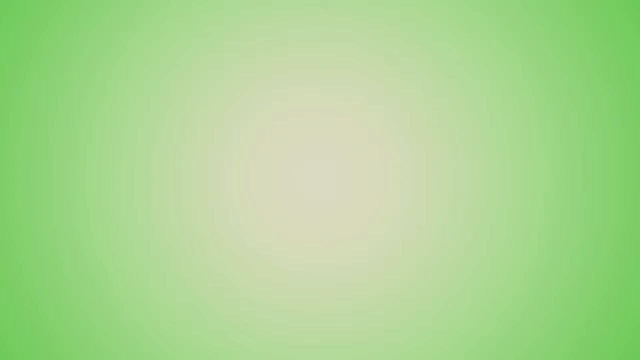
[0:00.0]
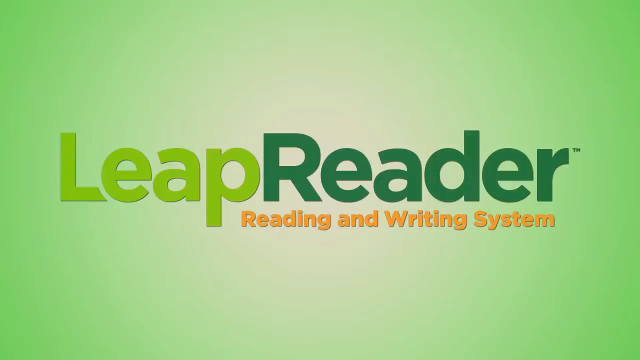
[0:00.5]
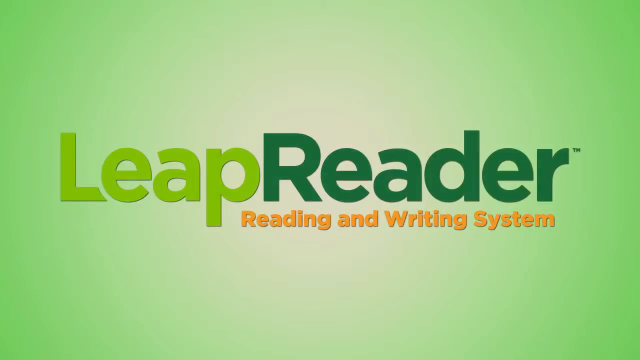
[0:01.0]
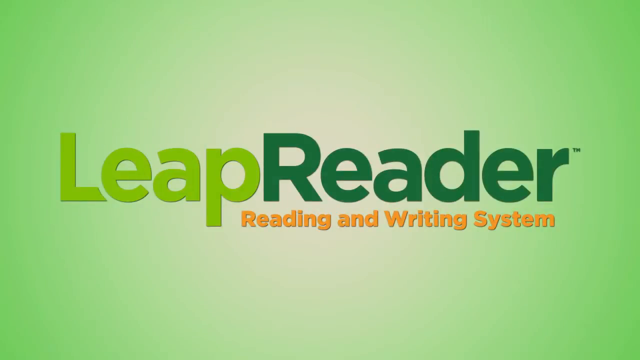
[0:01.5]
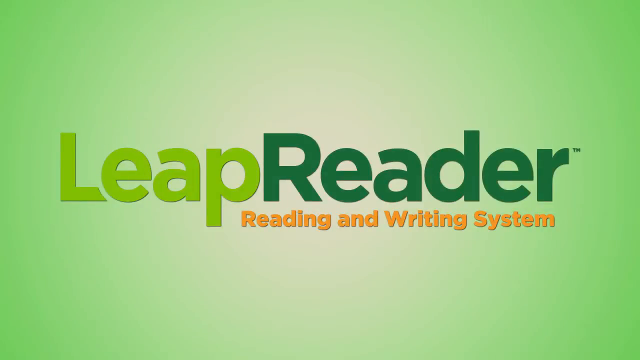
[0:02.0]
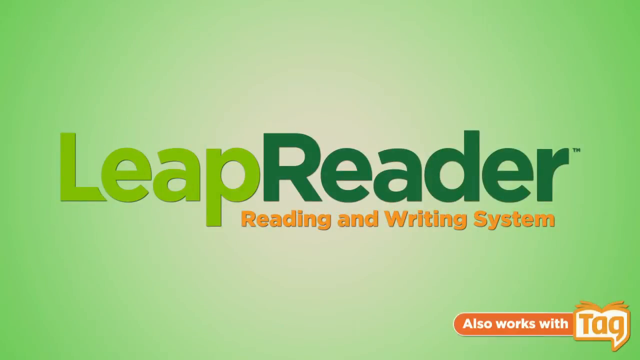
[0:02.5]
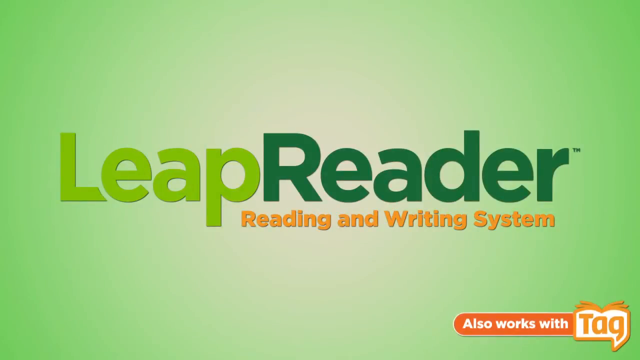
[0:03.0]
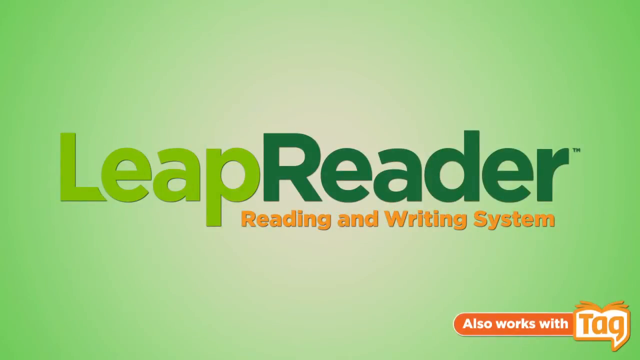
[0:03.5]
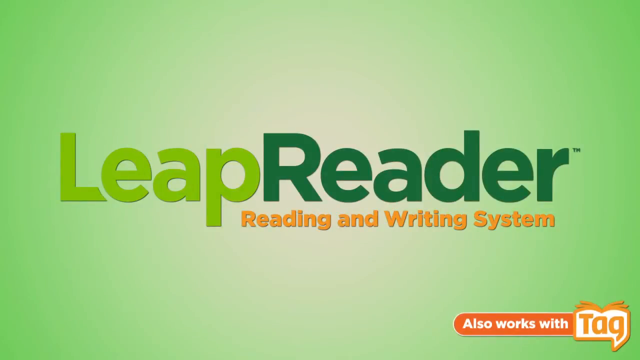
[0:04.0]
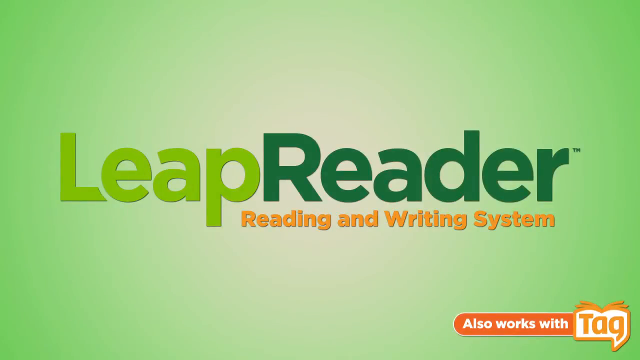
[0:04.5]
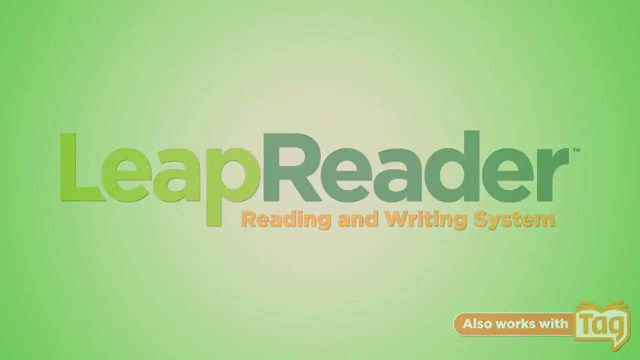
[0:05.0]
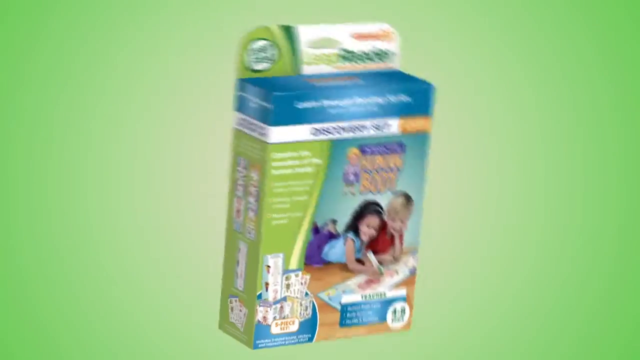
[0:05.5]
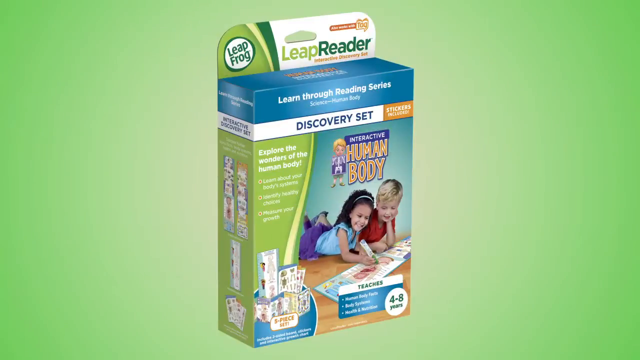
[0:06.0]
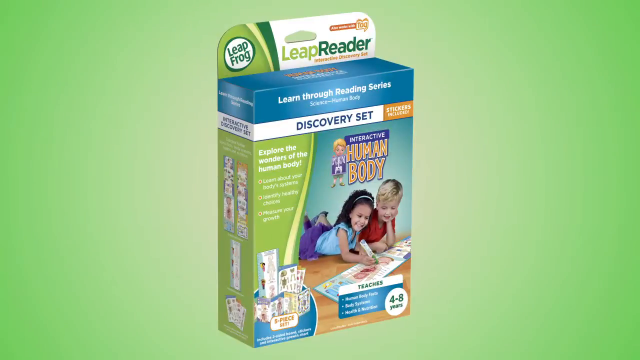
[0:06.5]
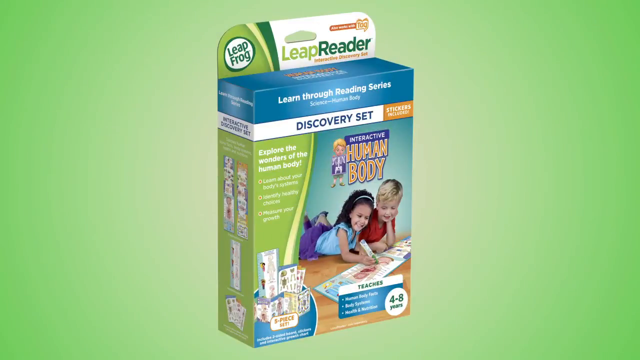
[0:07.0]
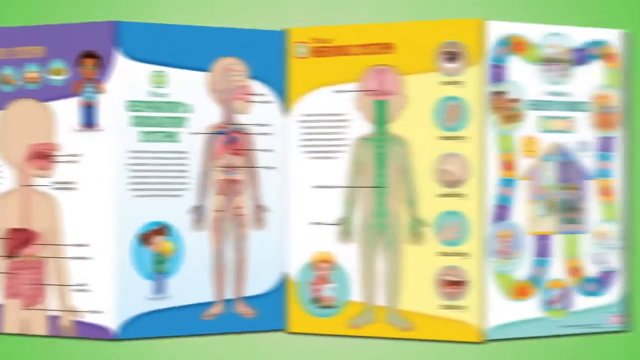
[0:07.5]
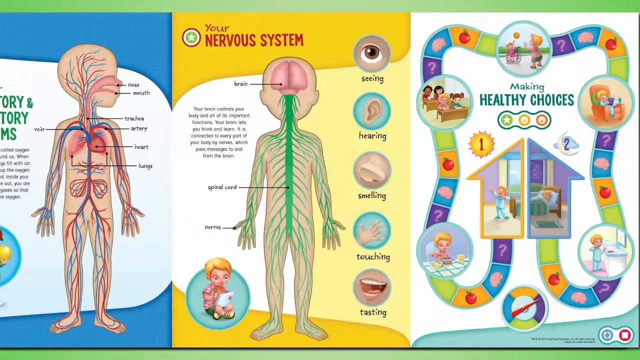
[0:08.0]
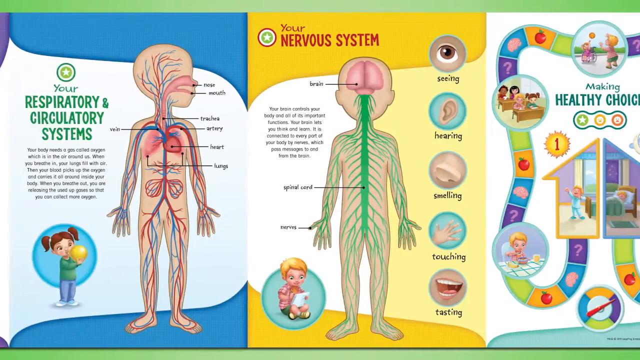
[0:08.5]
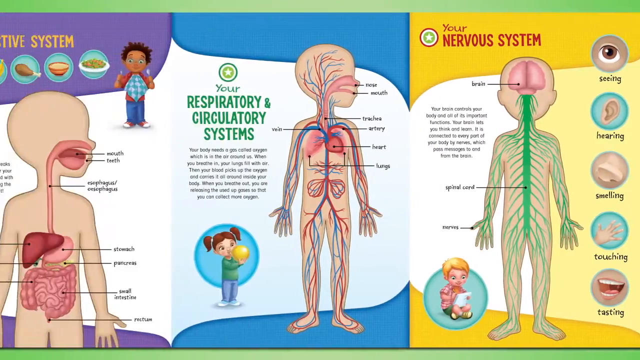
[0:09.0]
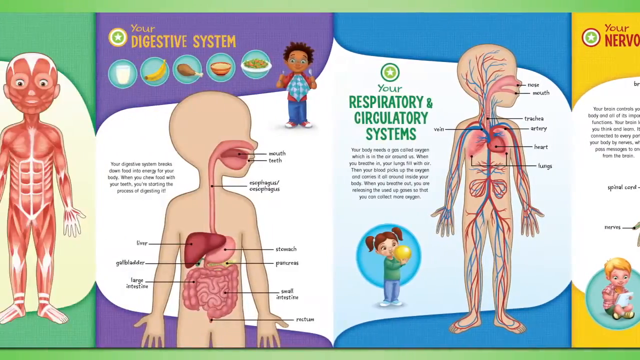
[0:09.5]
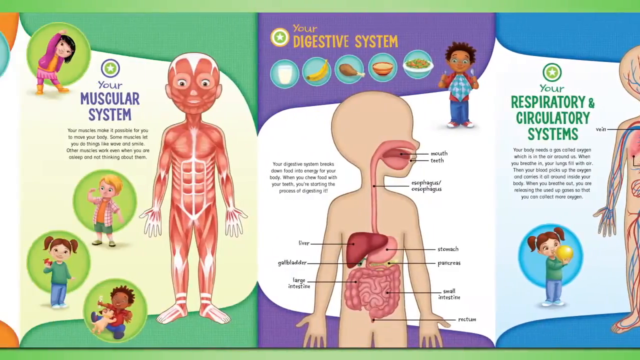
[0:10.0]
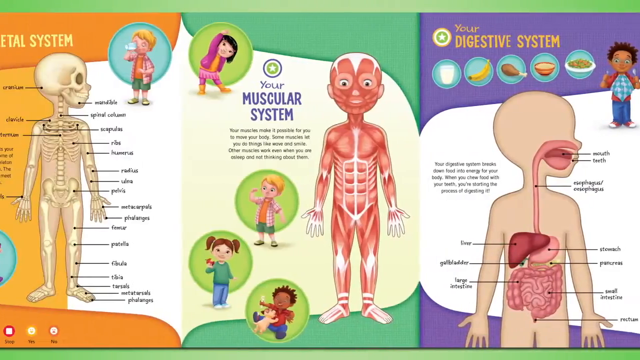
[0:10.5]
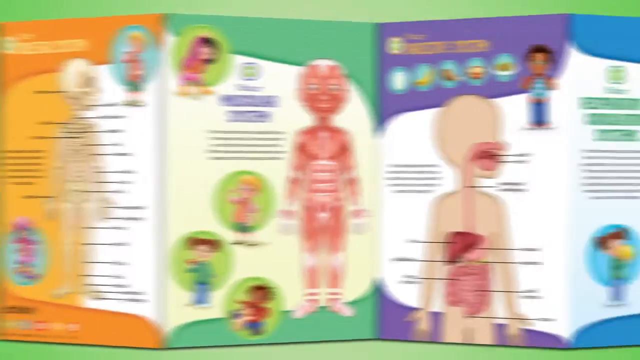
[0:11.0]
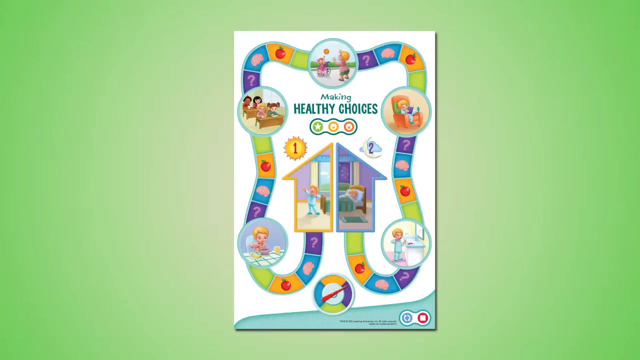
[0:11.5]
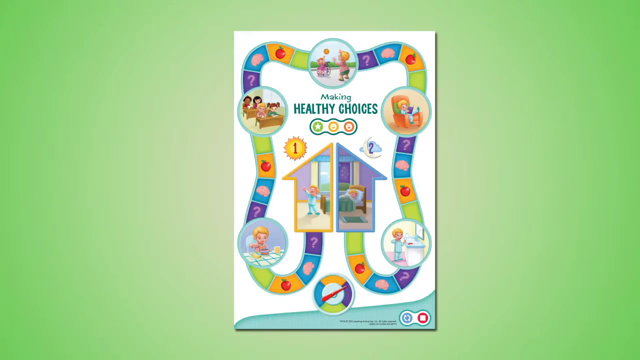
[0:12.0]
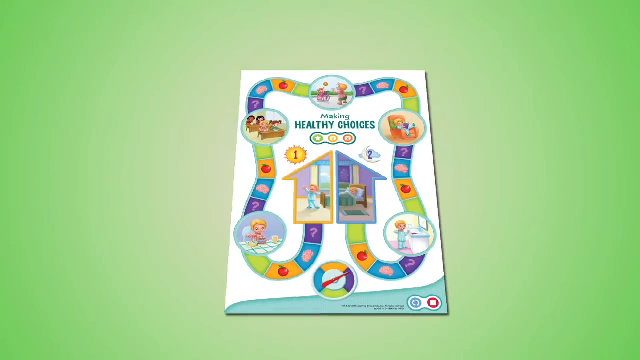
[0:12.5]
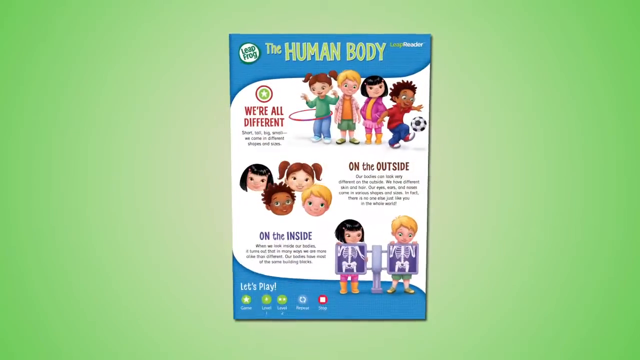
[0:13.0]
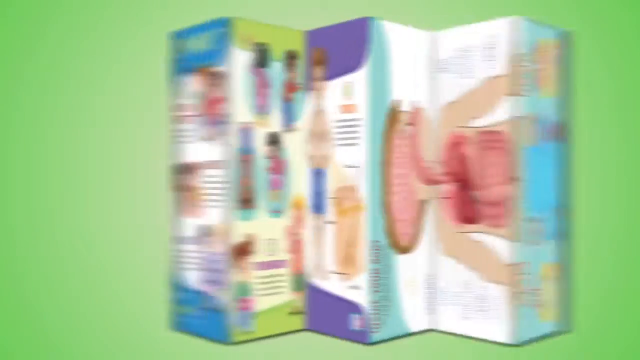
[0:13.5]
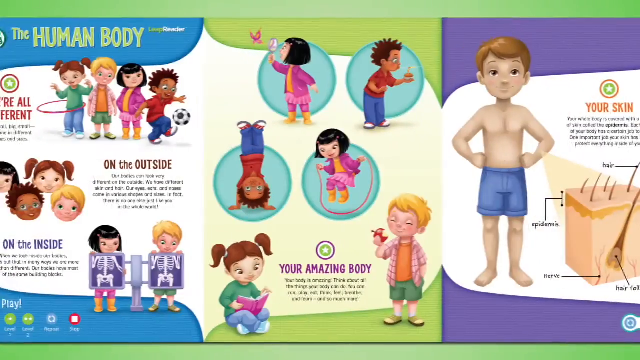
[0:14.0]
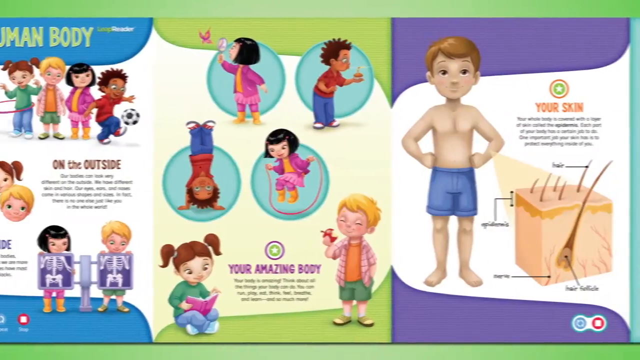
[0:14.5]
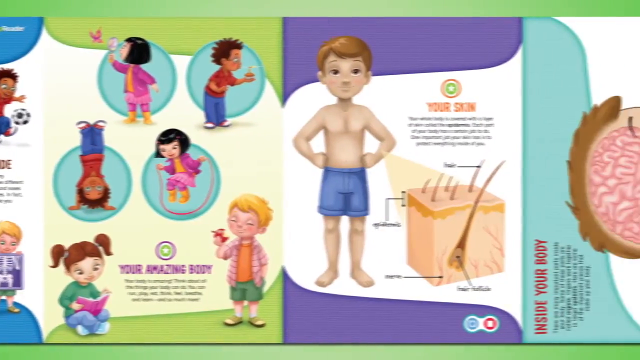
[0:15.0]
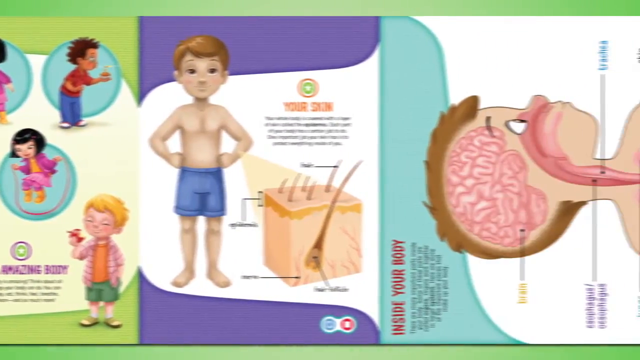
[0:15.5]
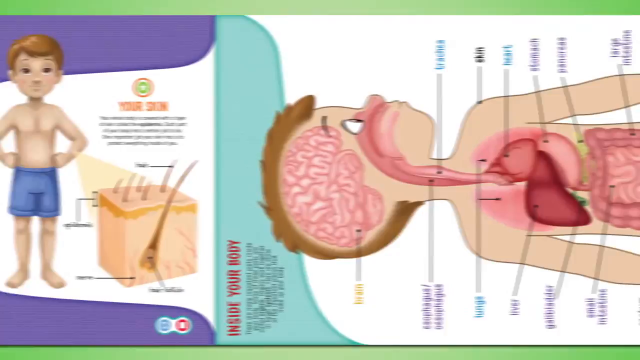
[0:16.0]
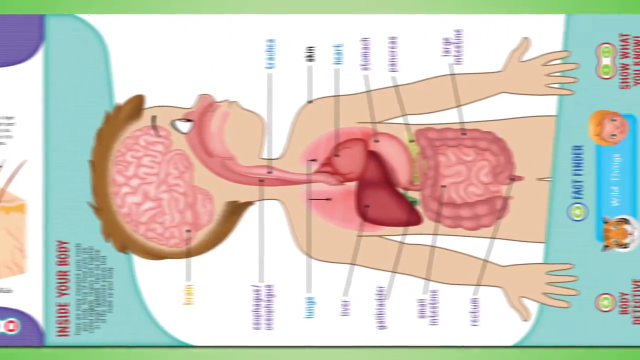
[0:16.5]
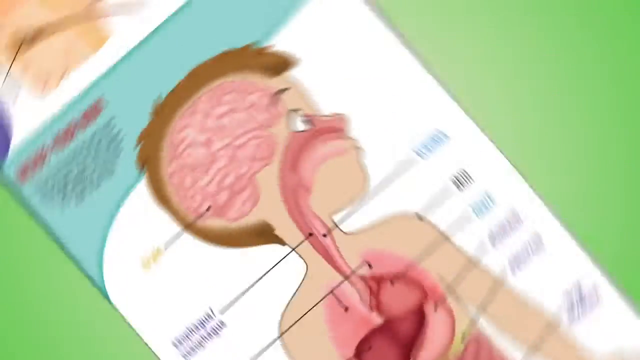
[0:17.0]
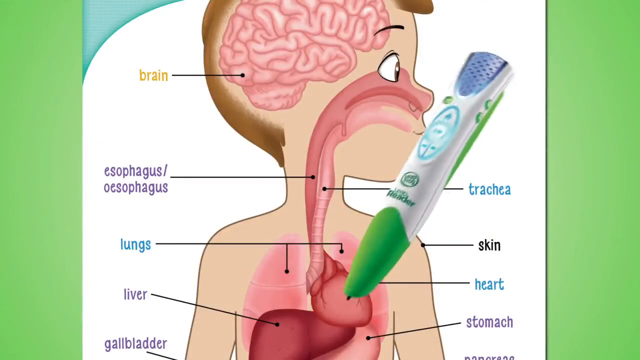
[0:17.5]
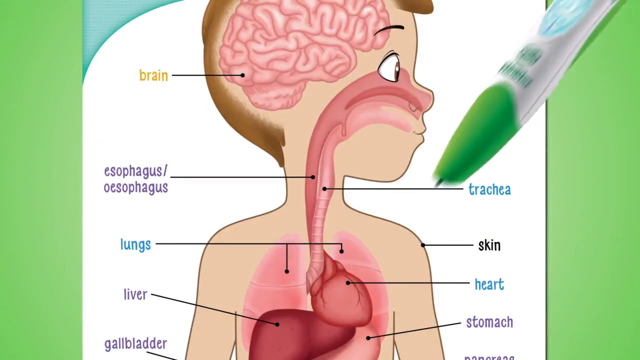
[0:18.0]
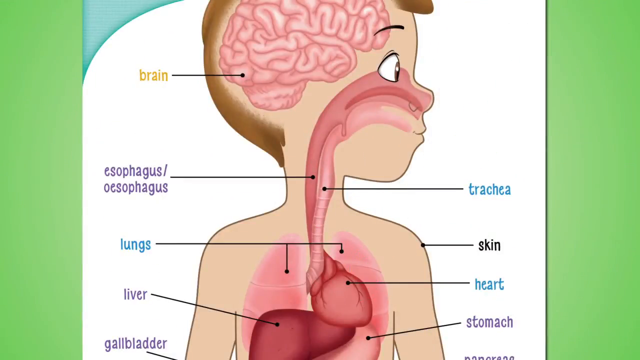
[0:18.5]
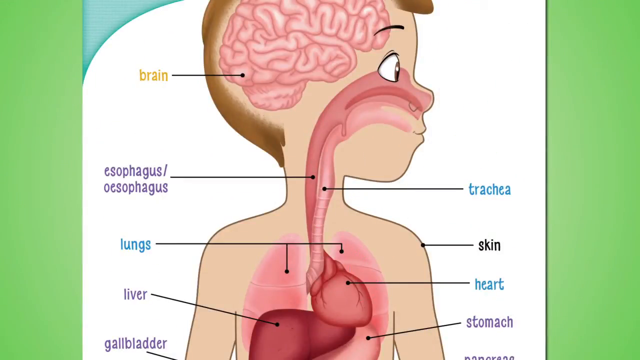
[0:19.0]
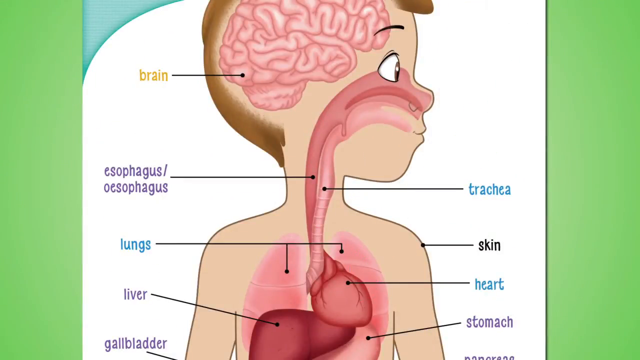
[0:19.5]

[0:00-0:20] The screen has a light green background with "leap reader" written in green, and the buttons at the bottom are bold. "reading and writing system" is written in light orange, and on the bottom right the words "also works with tag" appear, also in light orange. A box appears with "human body" written on it and the sign of a boy standing on the bottom part. Two kids, a boy and a girl, are lying down. The girl seems to be writing something on a box; she wears a blue top and a purple bottom. The boy wears a red top. On the top of the box is written "leap reader", and in the corner "lip flow". Various articles and pictures are shown on the box. The box is at the center of the page, and on the bottom right side of the box is written "4 to 8 years".